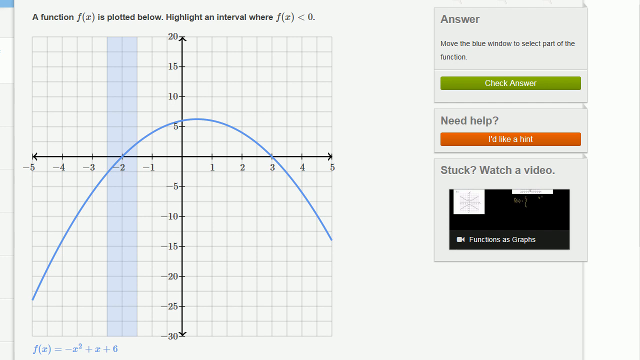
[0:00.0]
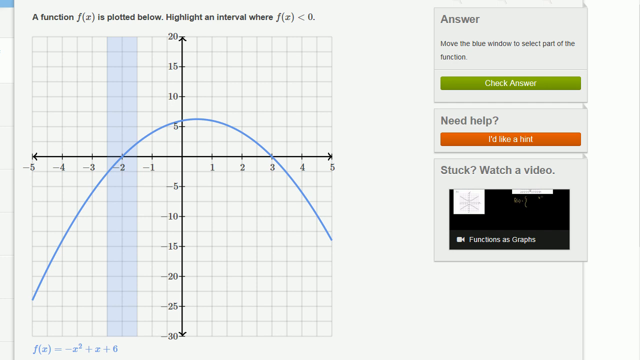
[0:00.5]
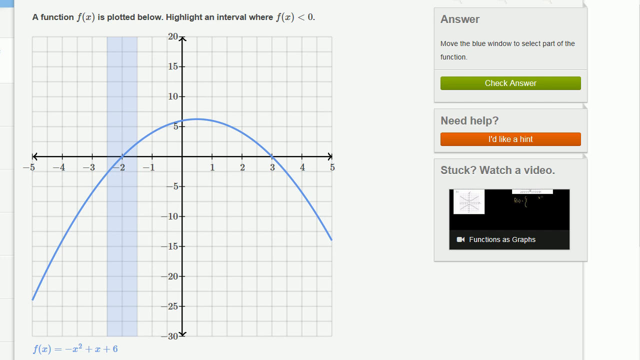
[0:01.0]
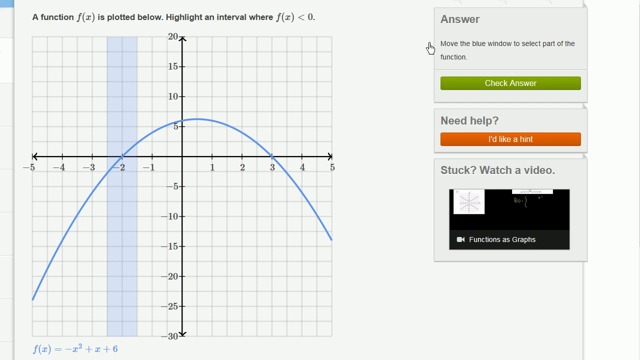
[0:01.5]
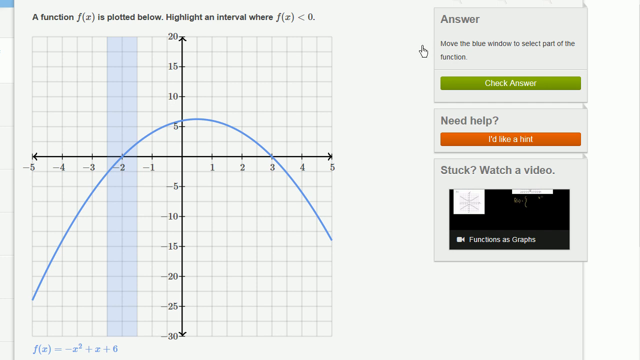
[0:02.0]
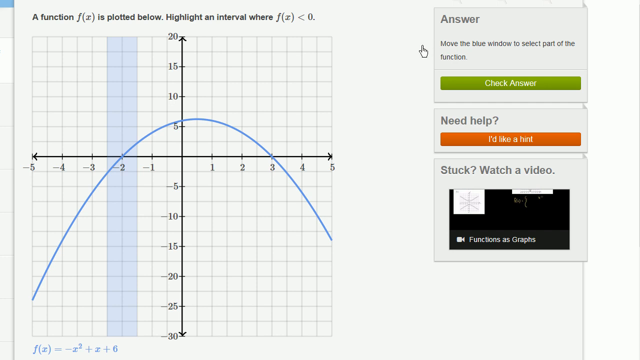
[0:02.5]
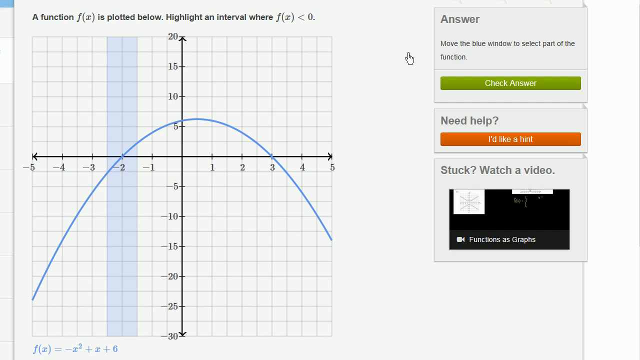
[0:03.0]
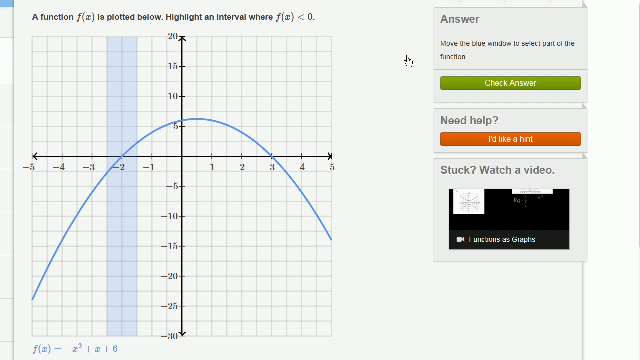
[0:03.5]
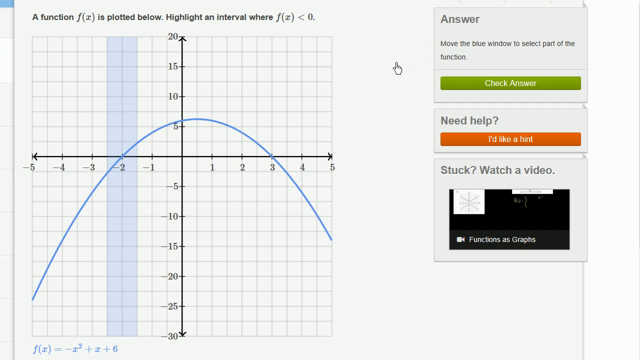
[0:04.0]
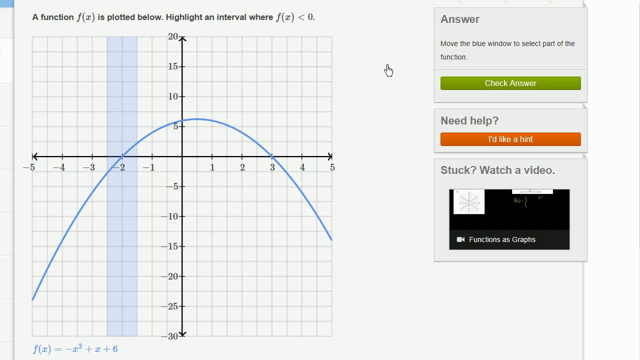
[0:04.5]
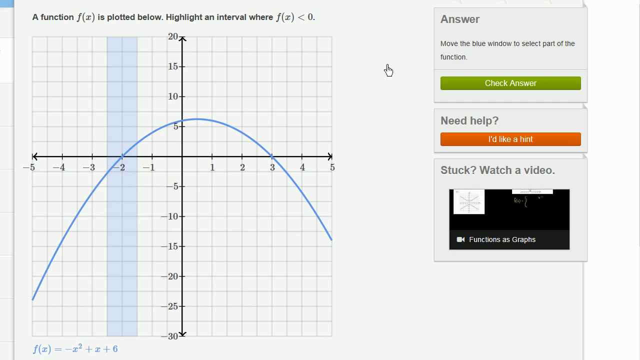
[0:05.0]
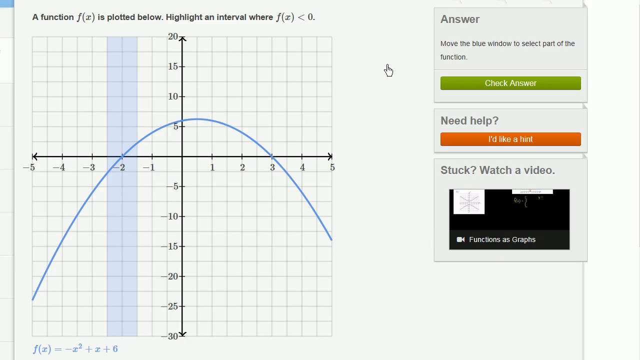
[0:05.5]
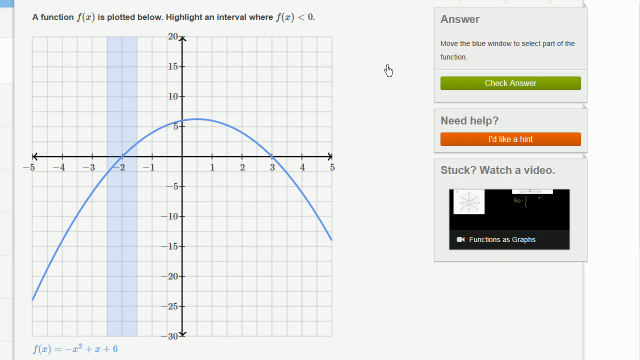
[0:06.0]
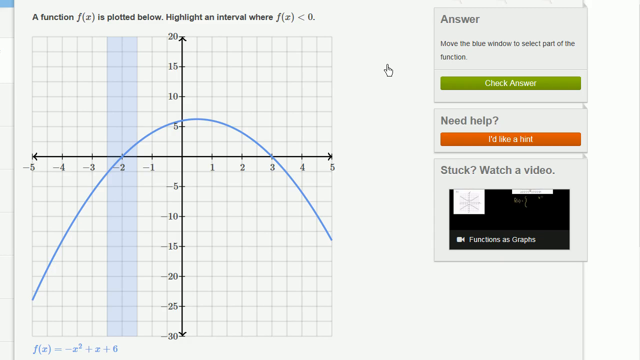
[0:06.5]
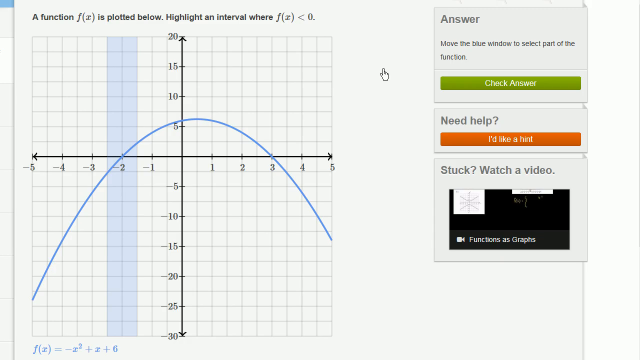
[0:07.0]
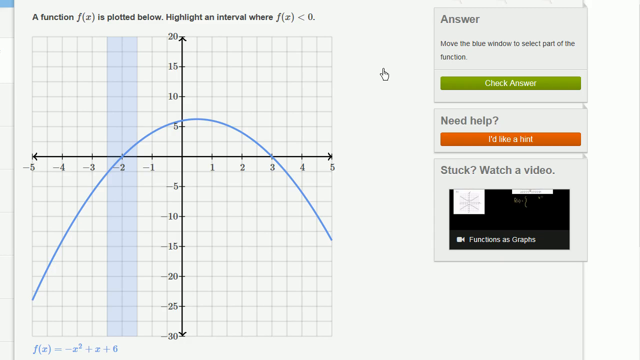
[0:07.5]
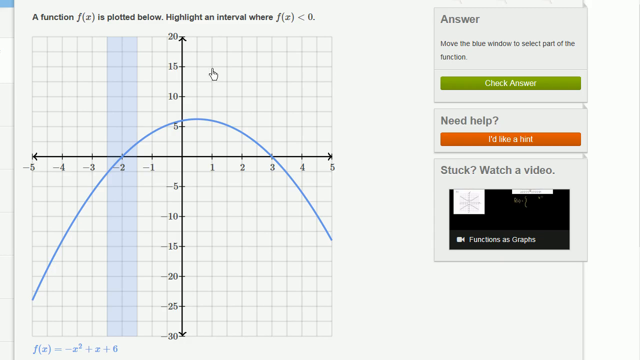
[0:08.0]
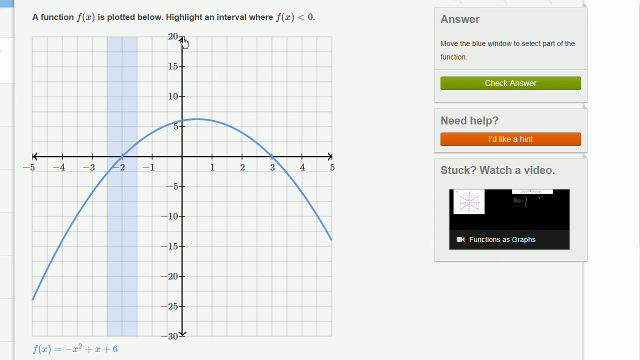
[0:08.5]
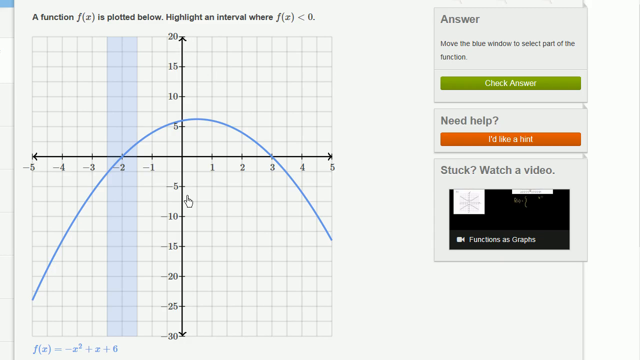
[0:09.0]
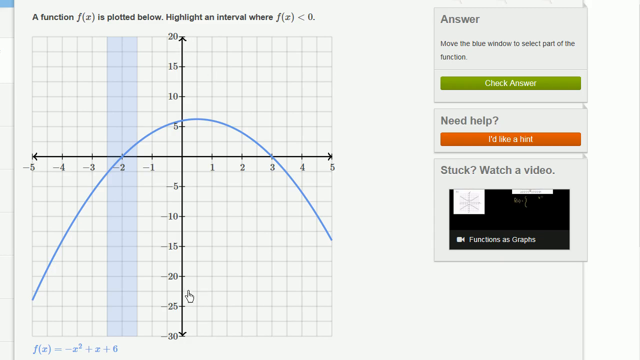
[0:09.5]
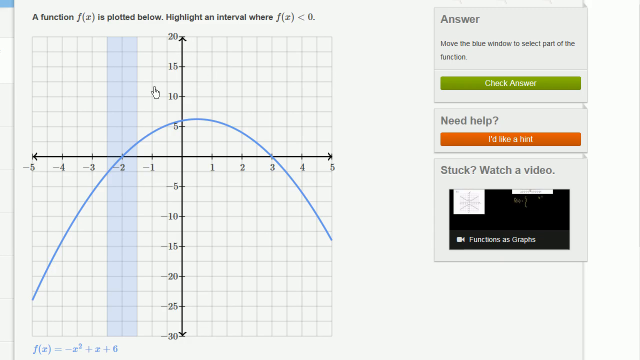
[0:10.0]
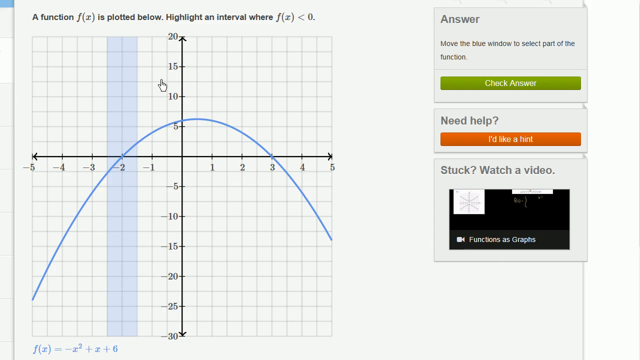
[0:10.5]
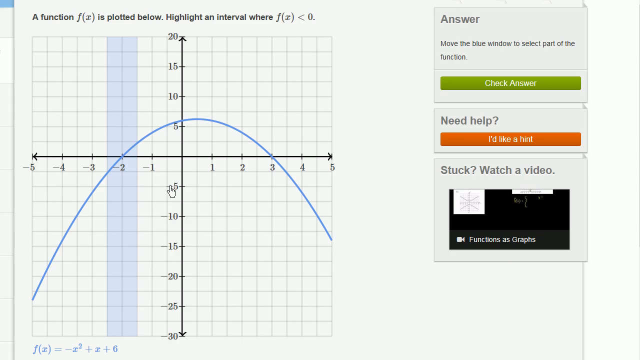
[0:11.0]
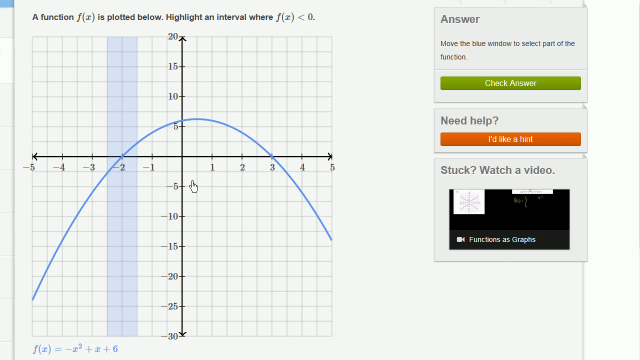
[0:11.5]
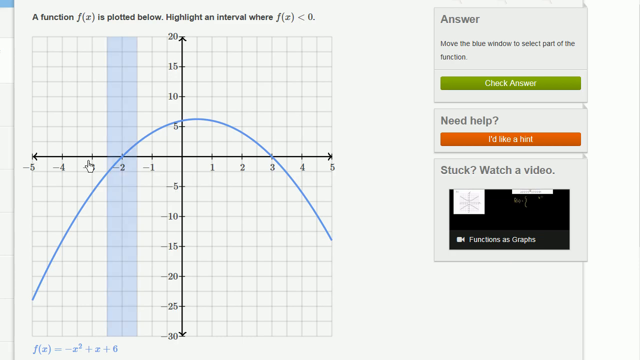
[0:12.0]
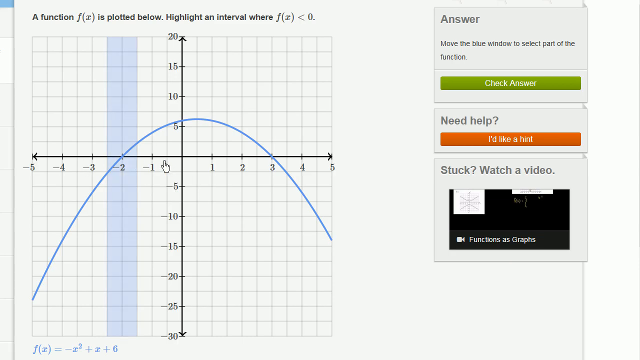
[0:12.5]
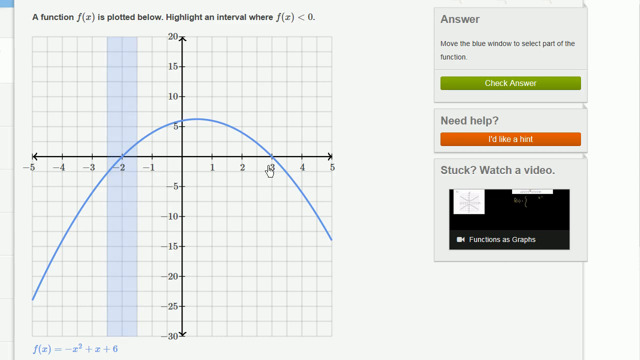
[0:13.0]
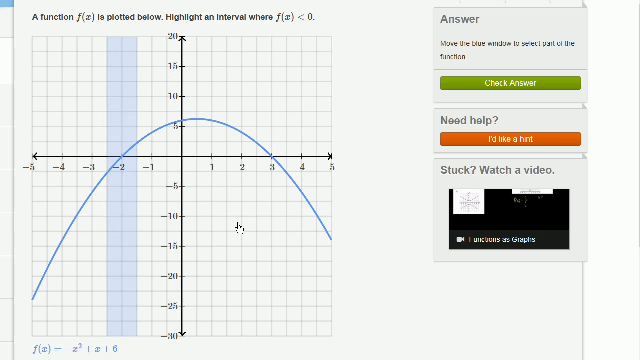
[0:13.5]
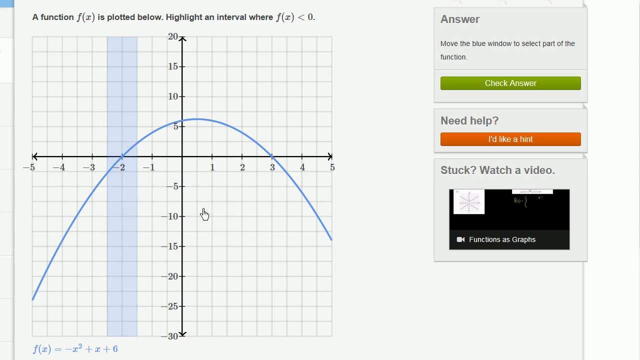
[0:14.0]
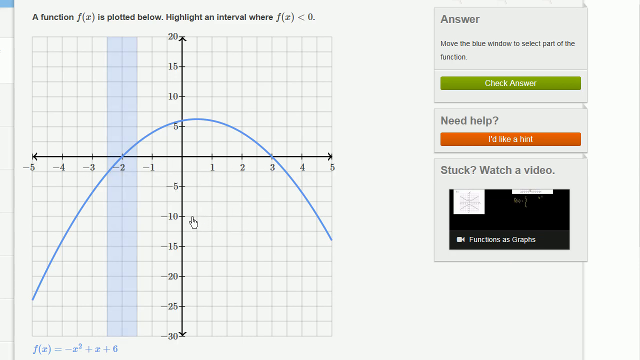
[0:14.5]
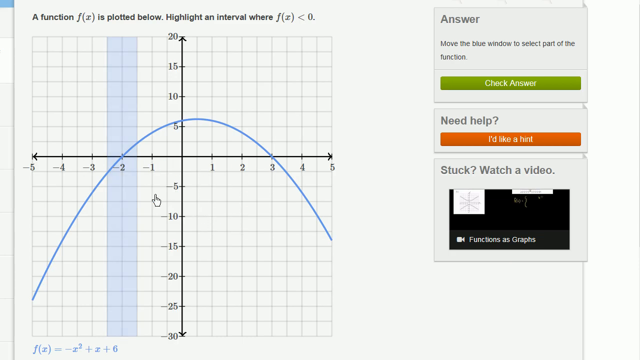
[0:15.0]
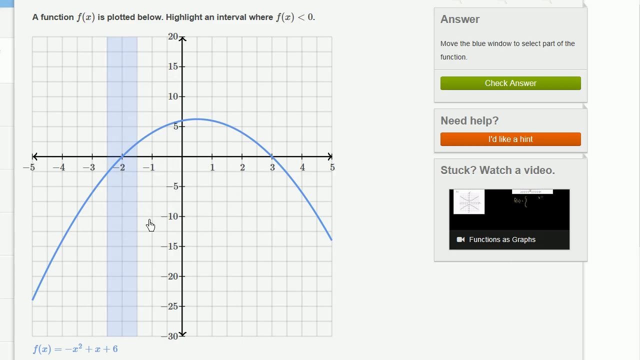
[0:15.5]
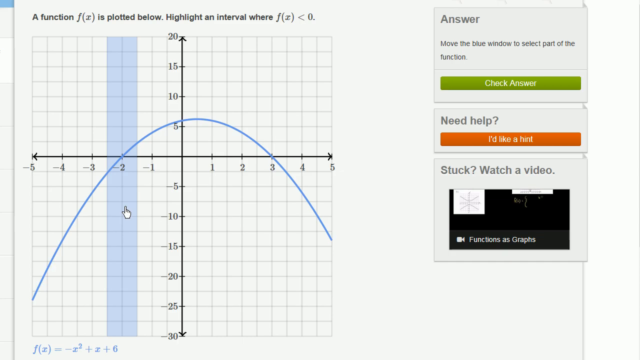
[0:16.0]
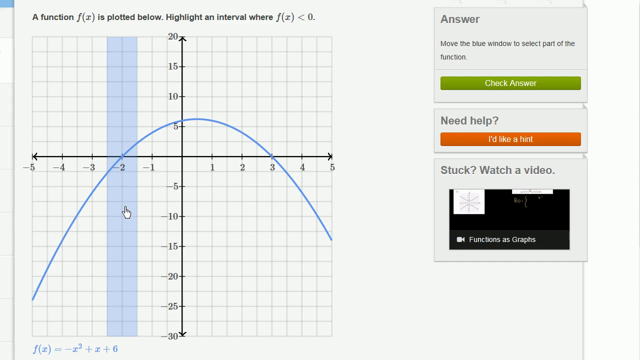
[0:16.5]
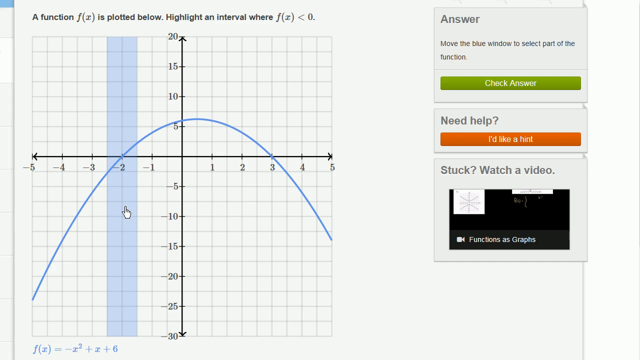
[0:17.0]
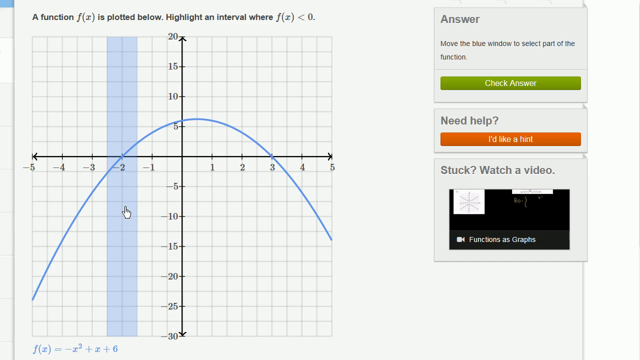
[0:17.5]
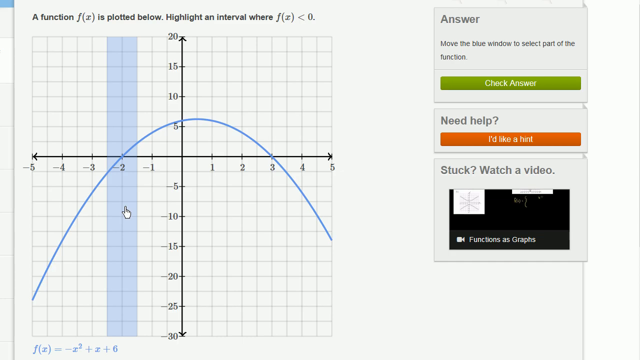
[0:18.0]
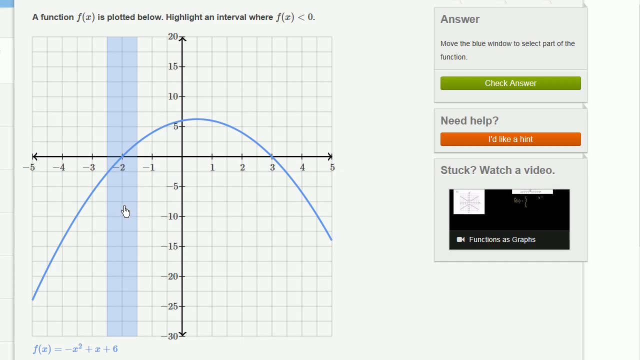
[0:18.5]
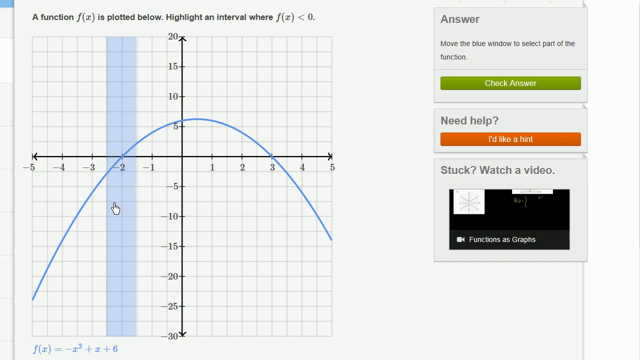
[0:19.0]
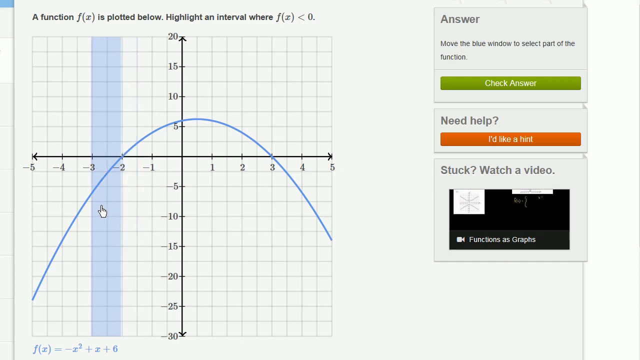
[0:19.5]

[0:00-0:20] The video appears to begin with a graph of a quadratic function on a grid, a parabola with the curve opening downward, so apparently with a negative coefficient on x squared. The vertex is somewhere around a half for the x value, with the y value maybe closer to 6.5, though no exact point is clearly visible. Part of the grid is shaded. A cursor moves up and down and around on the grid, suggesting someone may be instructing what everything stands for. To the right, text reads "answer," "move the blue window to select part of the function," "check answer," and "need help." It looks like a tutorial video to help kids with graphing parabolas.